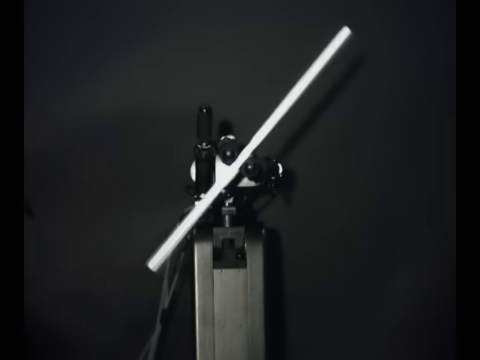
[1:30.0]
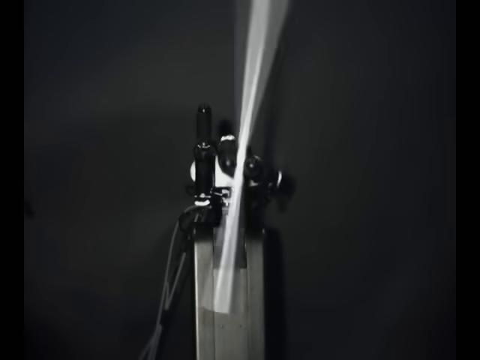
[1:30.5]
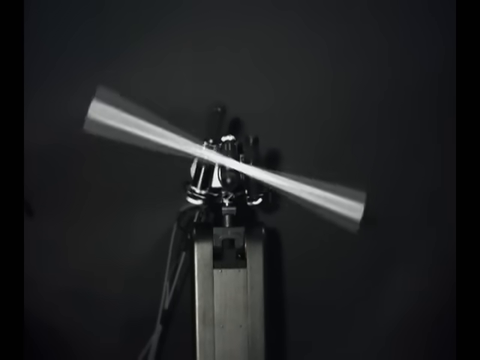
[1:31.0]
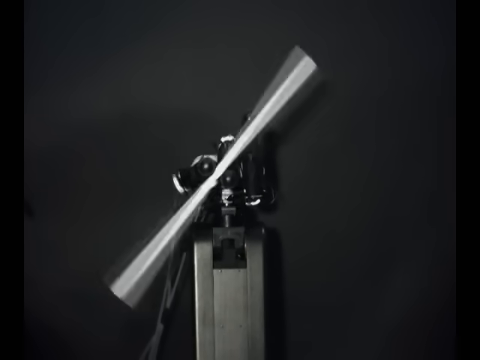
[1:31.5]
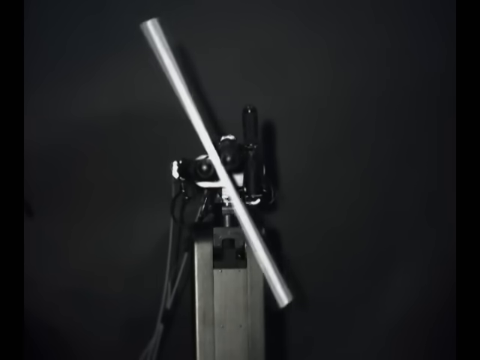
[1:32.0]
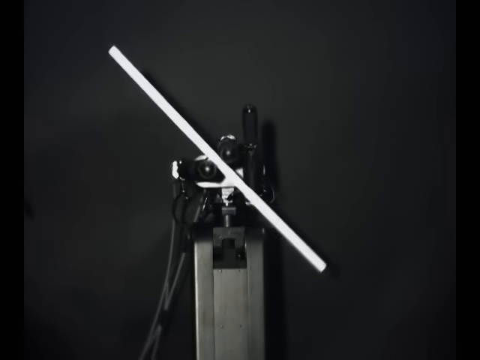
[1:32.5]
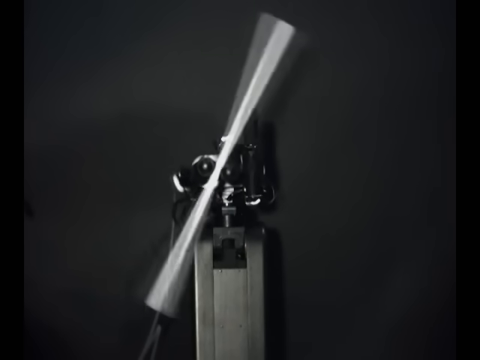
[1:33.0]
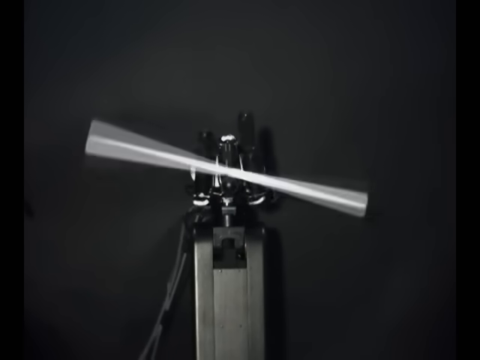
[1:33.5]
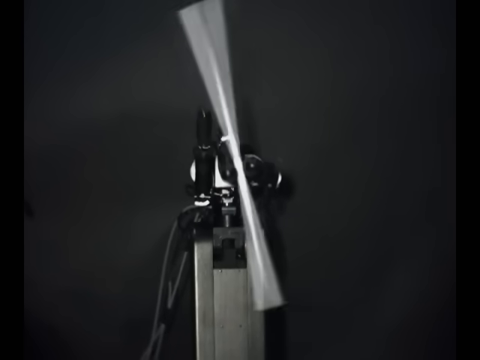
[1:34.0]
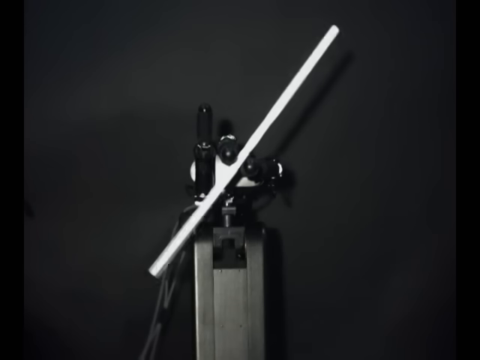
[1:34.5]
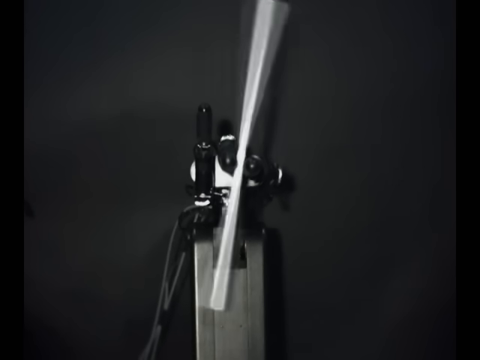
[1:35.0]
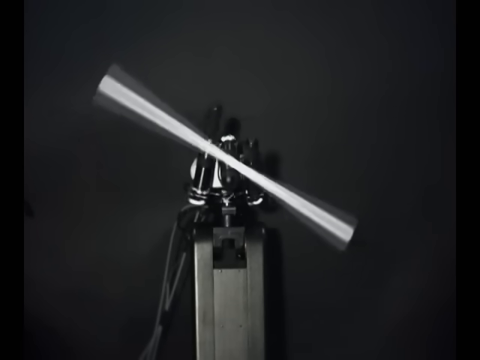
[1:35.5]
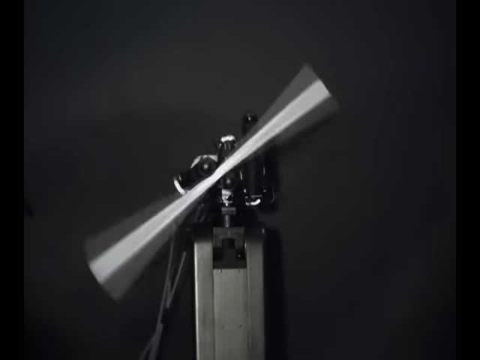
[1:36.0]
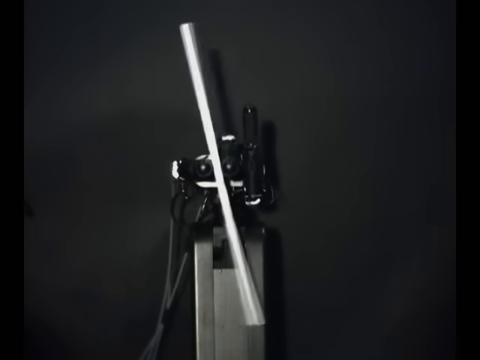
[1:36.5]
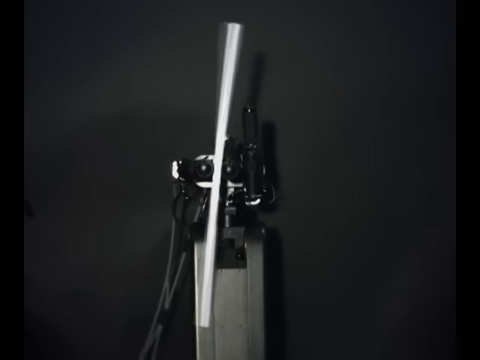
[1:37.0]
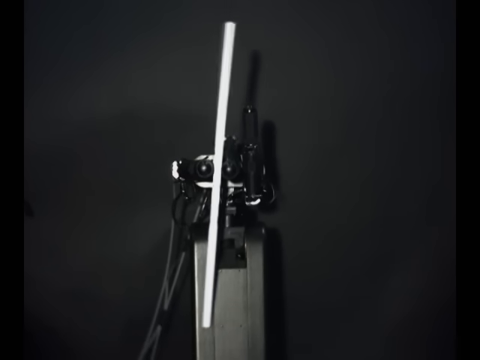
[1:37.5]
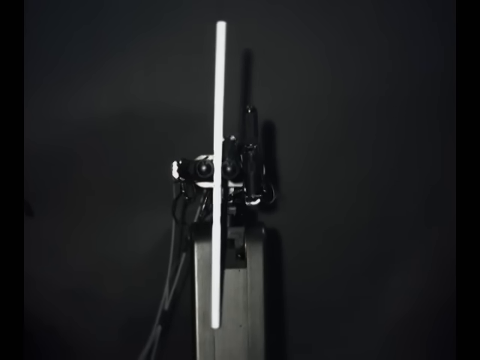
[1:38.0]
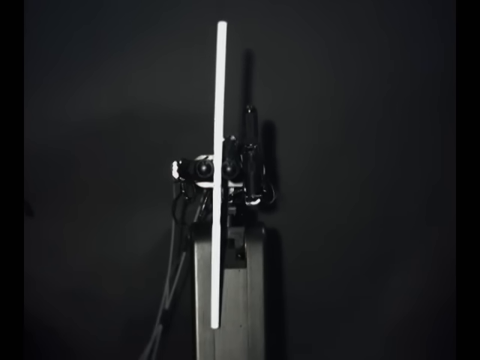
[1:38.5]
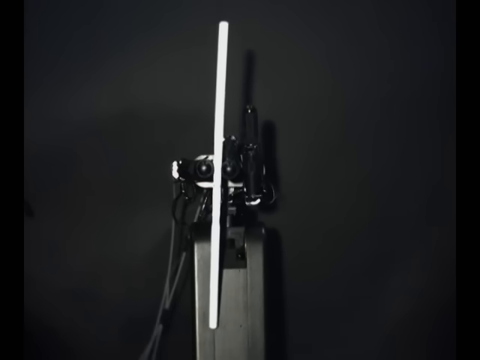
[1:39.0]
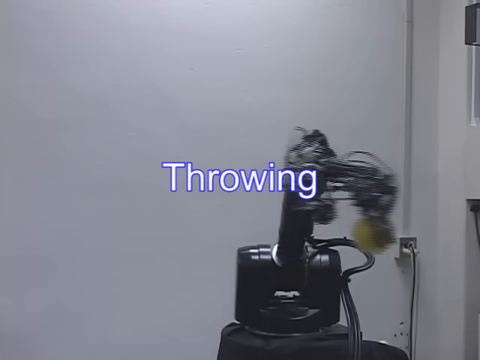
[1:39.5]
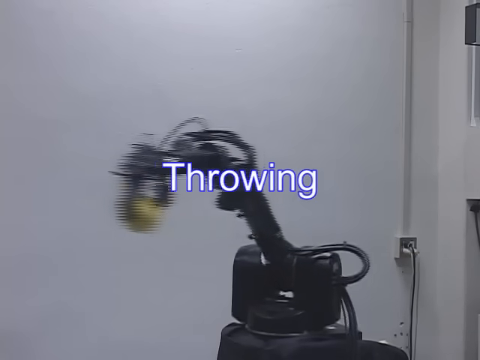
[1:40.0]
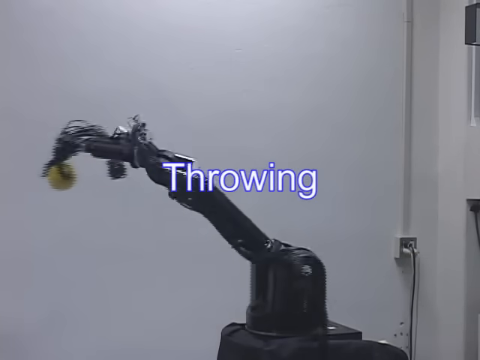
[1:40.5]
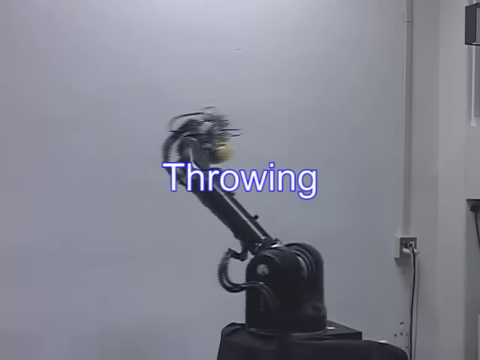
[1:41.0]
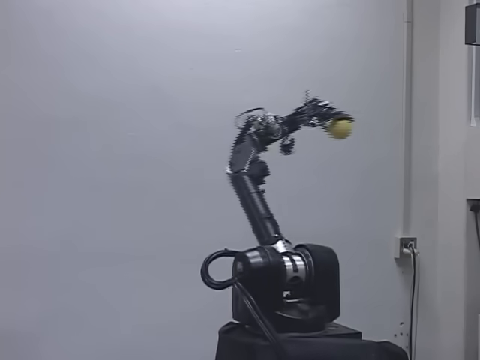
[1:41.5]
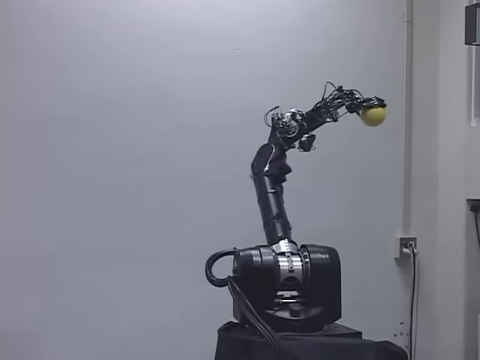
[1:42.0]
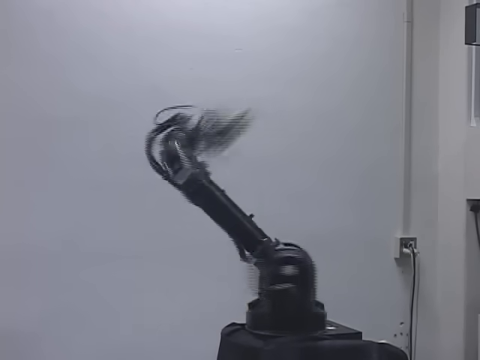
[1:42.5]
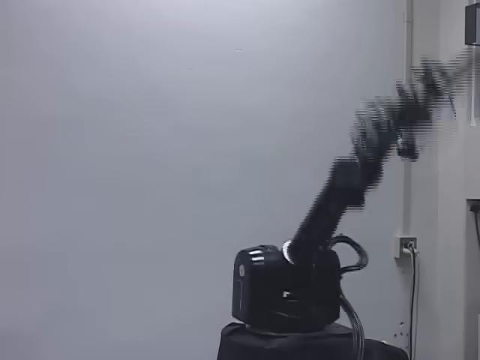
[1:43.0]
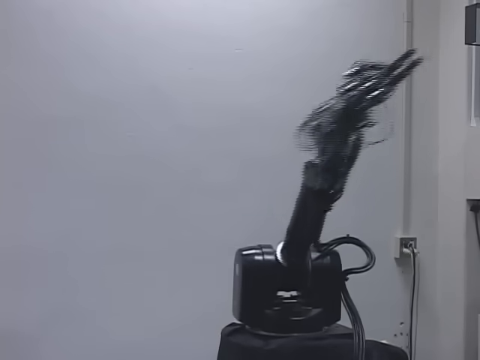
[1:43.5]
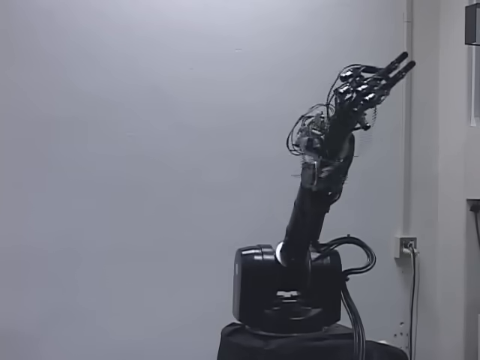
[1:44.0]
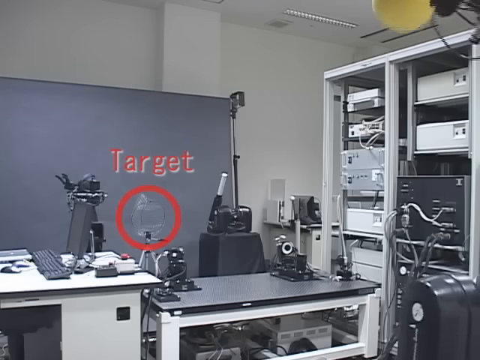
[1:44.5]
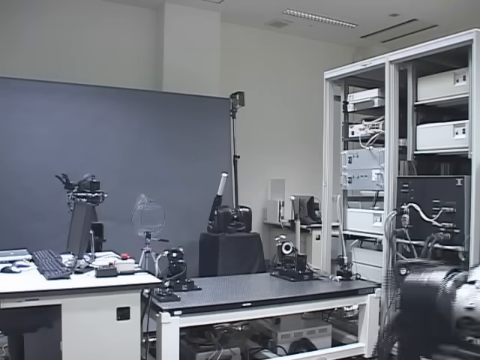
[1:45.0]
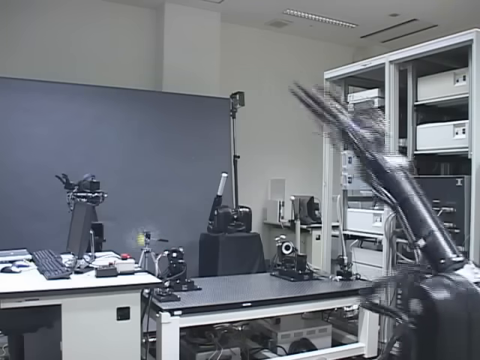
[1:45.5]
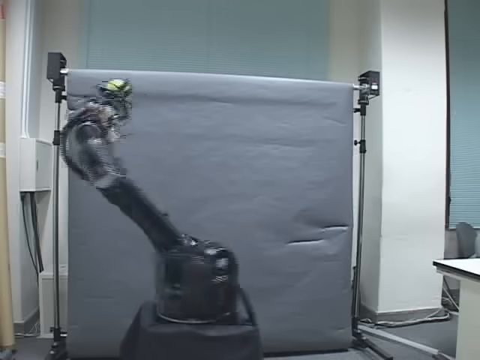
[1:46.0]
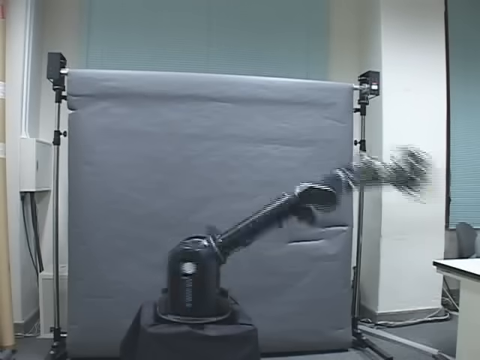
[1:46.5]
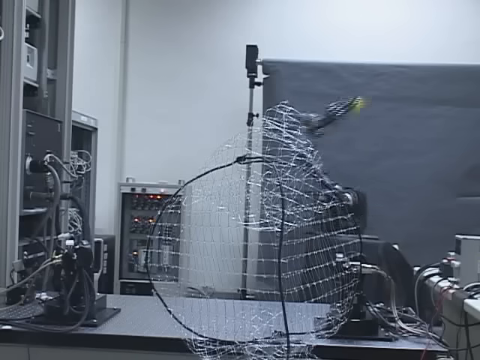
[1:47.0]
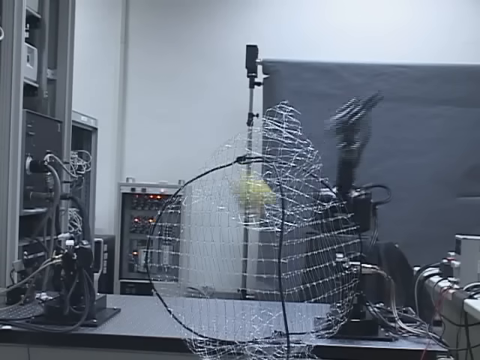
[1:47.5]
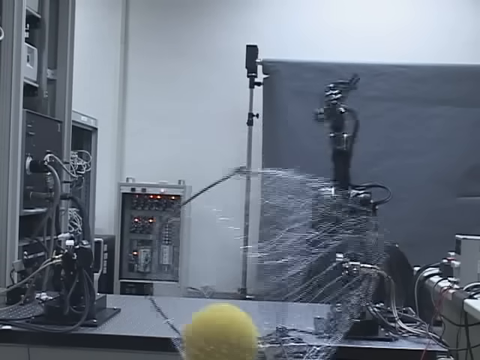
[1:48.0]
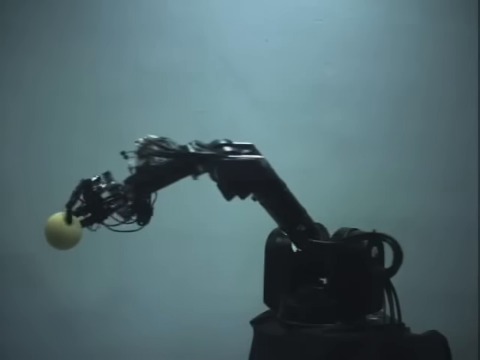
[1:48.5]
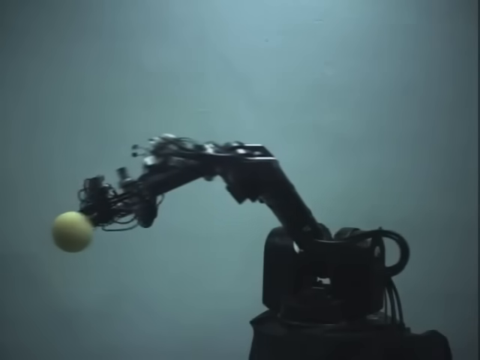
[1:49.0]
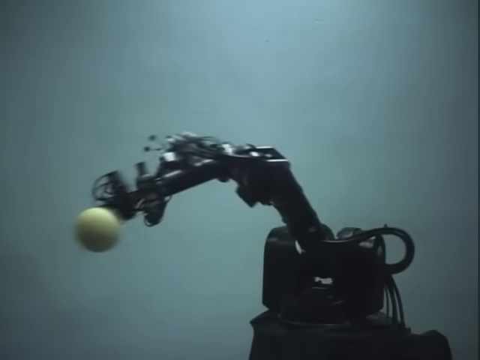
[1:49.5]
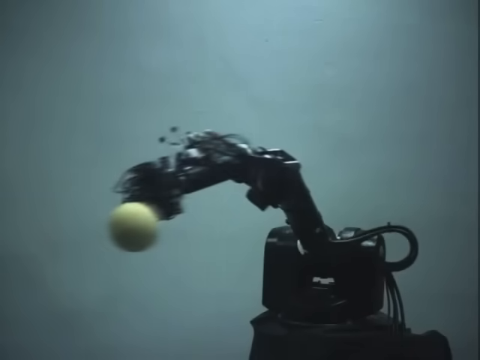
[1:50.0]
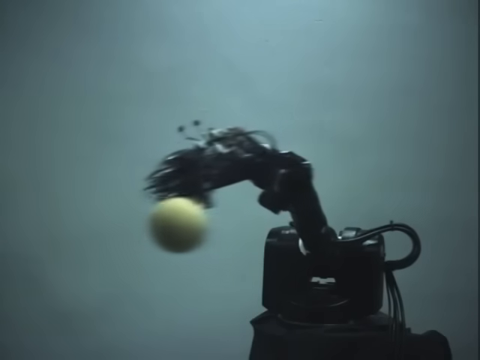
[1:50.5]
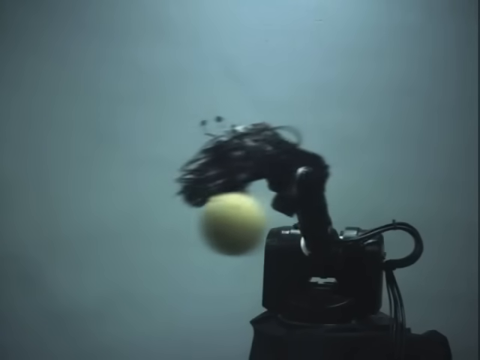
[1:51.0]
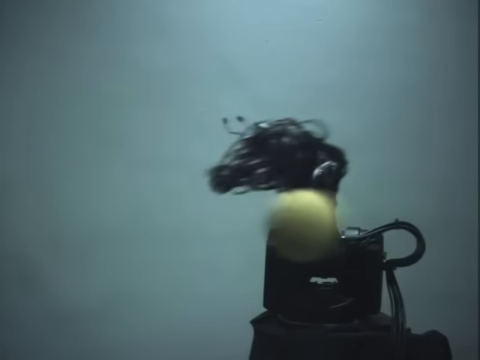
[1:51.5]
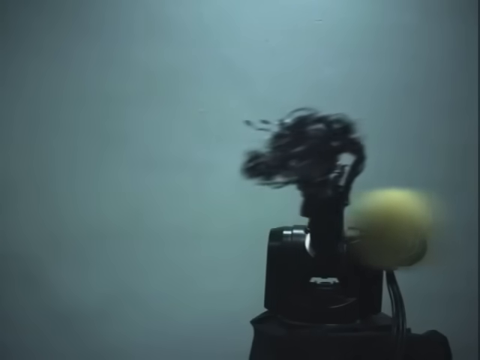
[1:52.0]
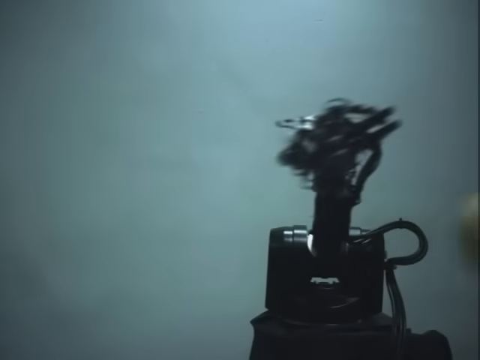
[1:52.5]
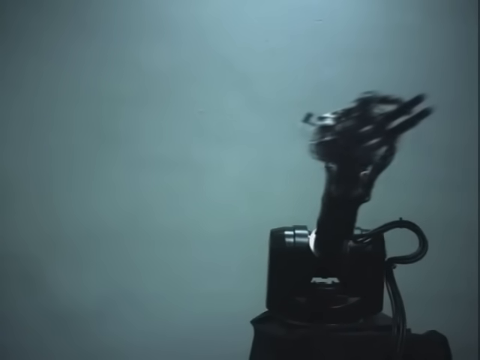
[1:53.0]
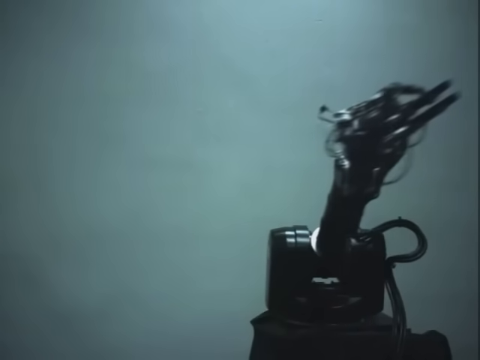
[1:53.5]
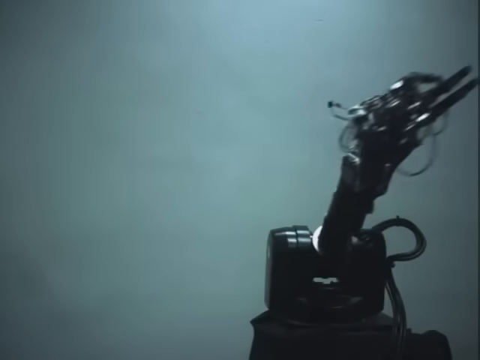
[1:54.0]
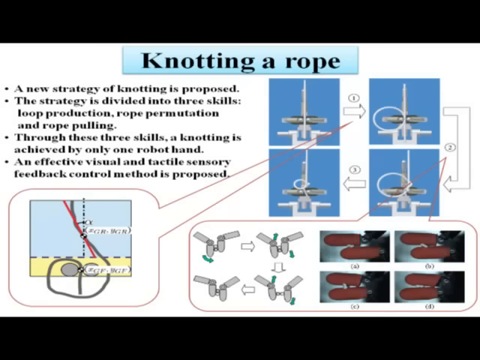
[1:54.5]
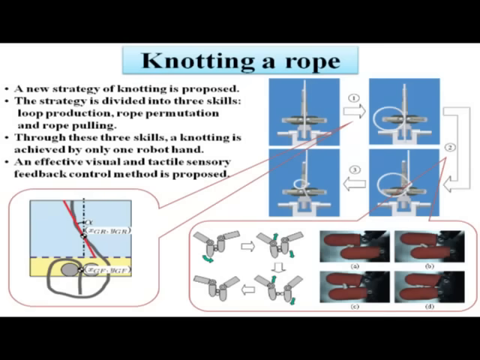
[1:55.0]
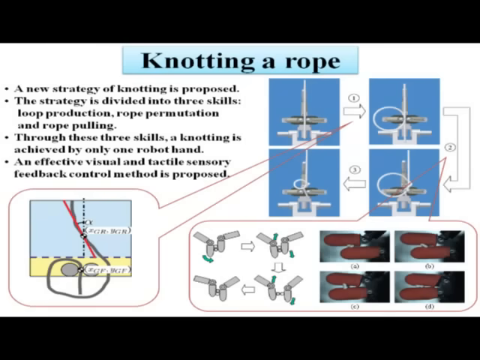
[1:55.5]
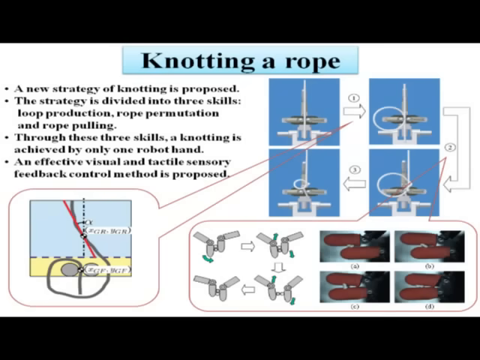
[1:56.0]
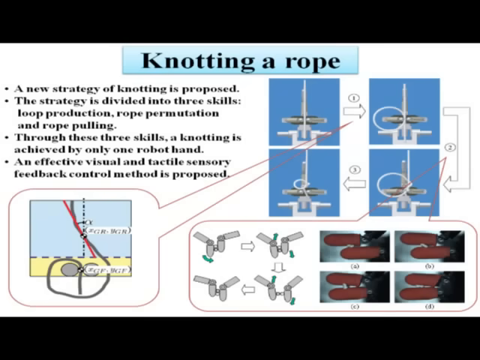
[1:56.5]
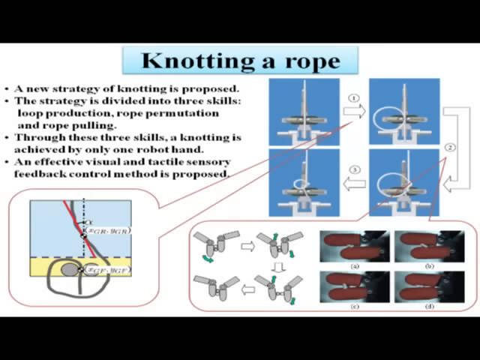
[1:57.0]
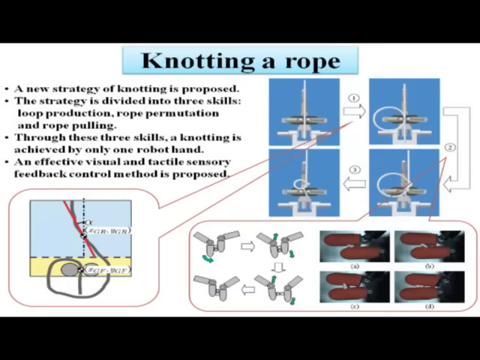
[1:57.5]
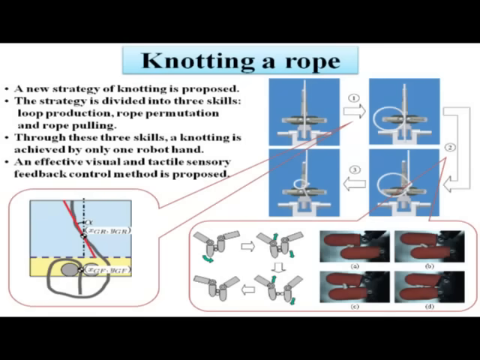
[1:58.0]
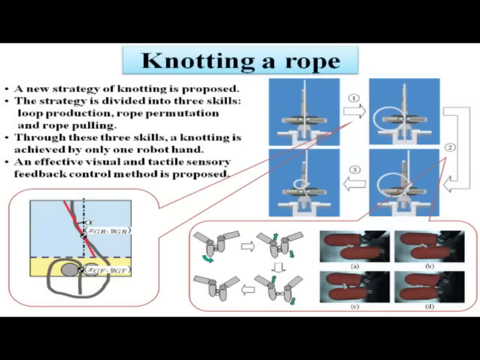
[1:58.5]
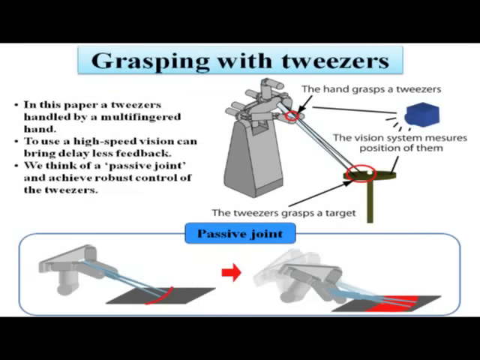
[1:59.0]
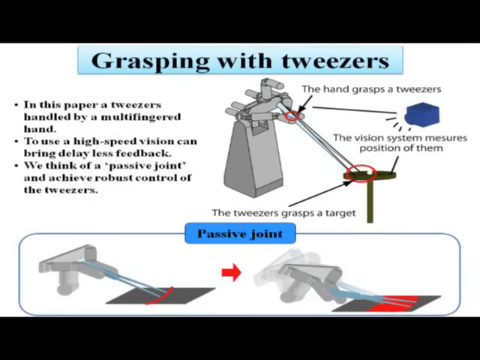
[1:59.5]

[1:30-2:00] A slow-motion view shows the robot spinning the pen around its three fingers, using the various fingers to spin it. The next scene is the throwing mechanism: the word "throwing" appears in the middle of the image in white lettering with a blue outline. The robot holds what looks to be a ball, winds back and throws the ball toward the opposite side of the screen, out of view. Various angles show the robot throwing the ball and hitting a specific target off screen, which looks to be some type of mesh netting. The computers and other things around the room show it is an older-style robotics setup. A PowerPoint-style slide then reads "knotting a rope", with more text information at the top left and various models in the right and bottom left portions showing how this is done. Another PowerPoint slide quickly pops up reading "grasping with tweezers", which looks to be part of the next scene.